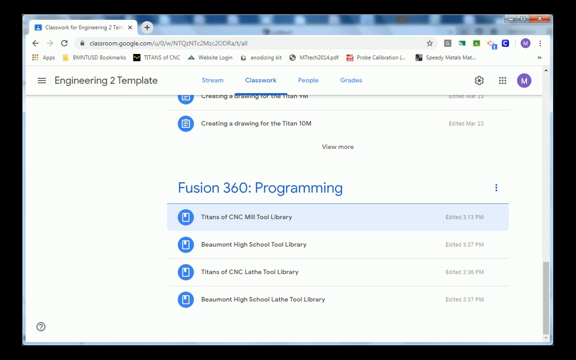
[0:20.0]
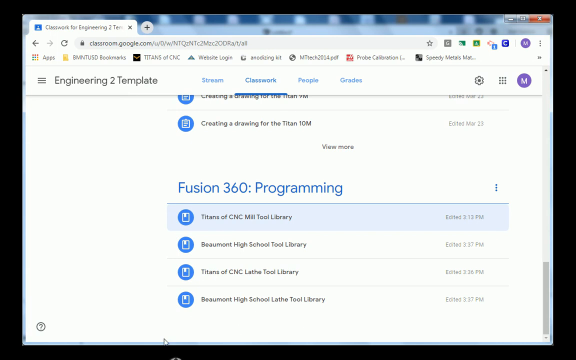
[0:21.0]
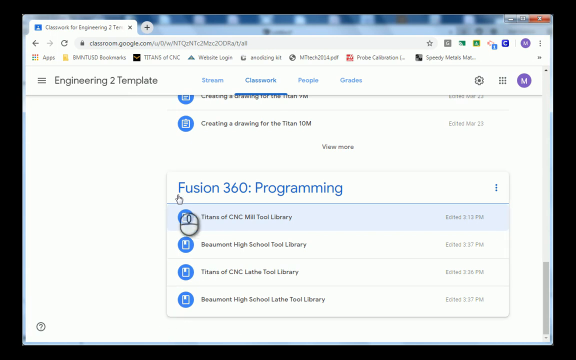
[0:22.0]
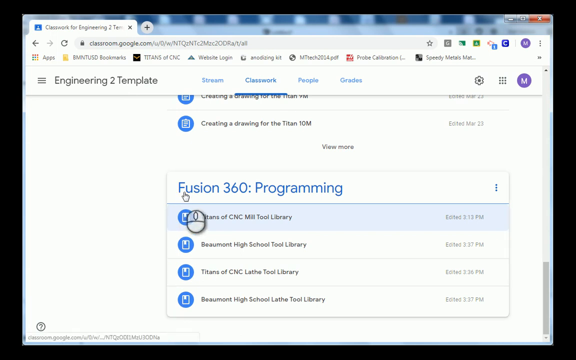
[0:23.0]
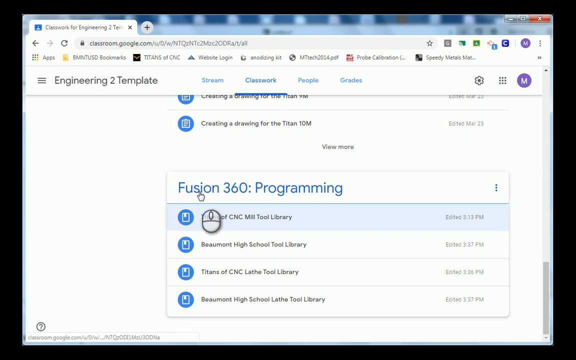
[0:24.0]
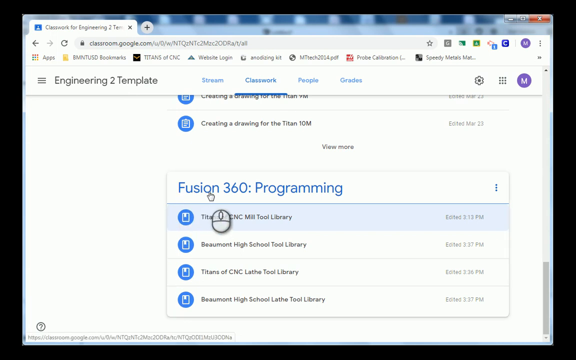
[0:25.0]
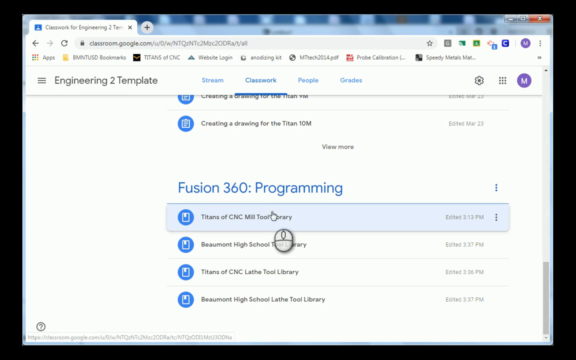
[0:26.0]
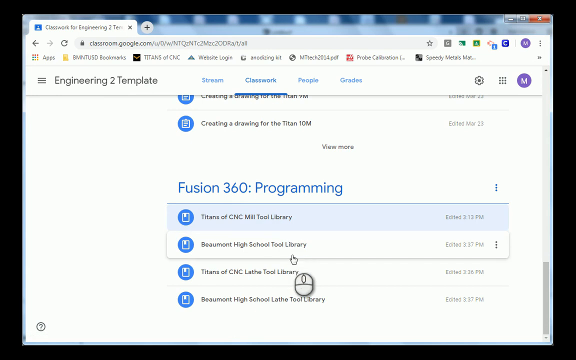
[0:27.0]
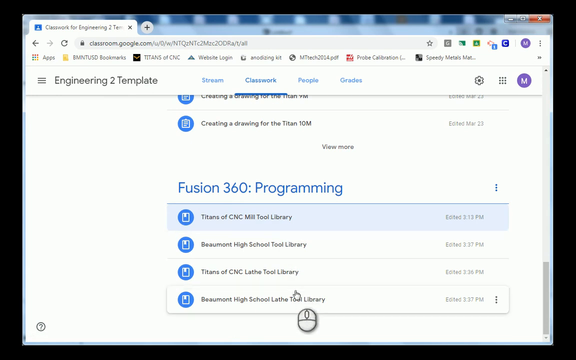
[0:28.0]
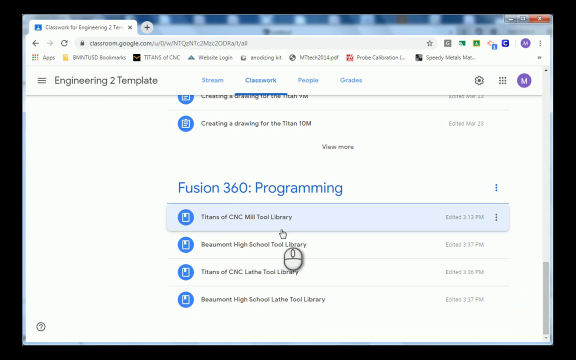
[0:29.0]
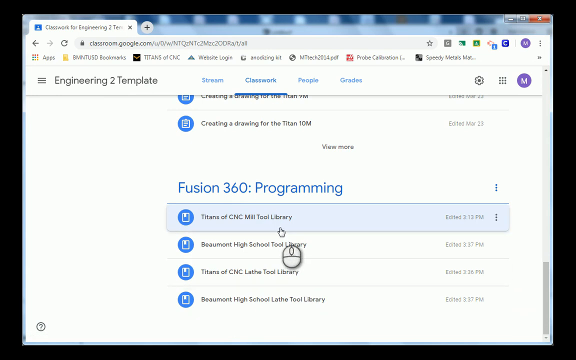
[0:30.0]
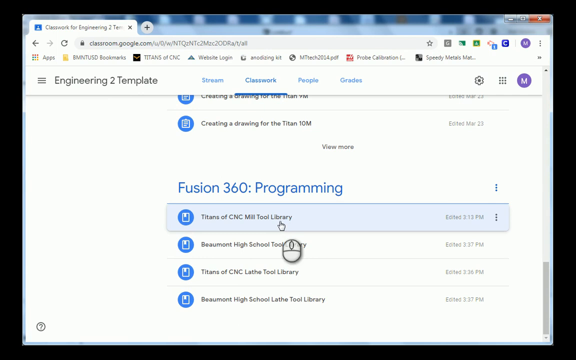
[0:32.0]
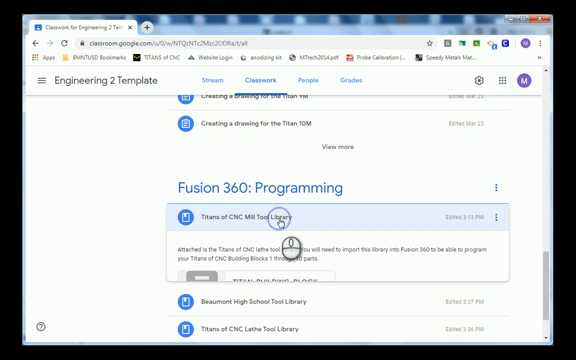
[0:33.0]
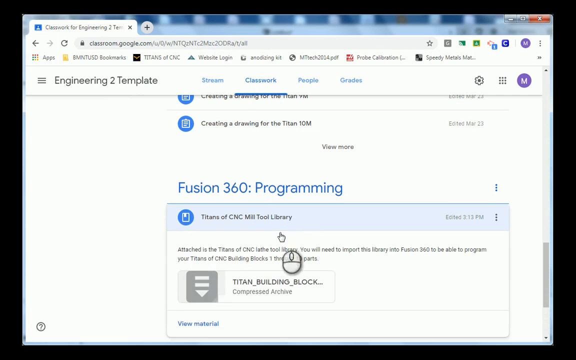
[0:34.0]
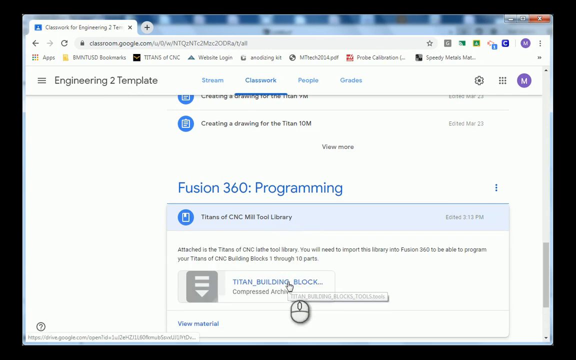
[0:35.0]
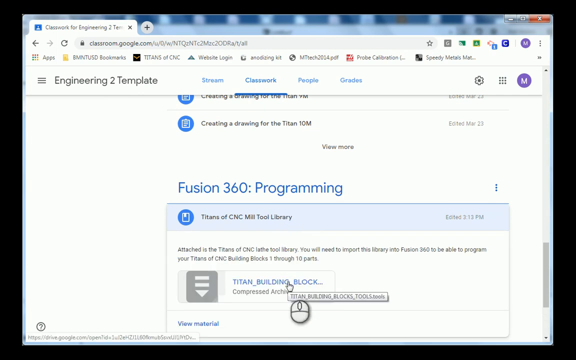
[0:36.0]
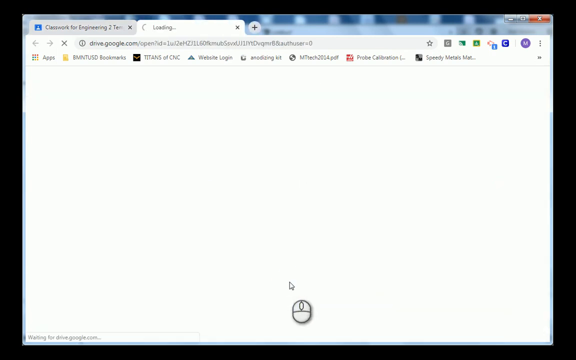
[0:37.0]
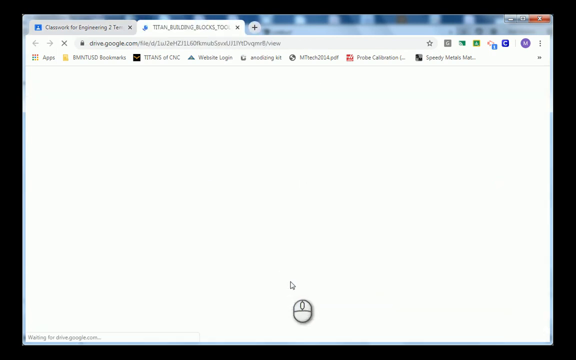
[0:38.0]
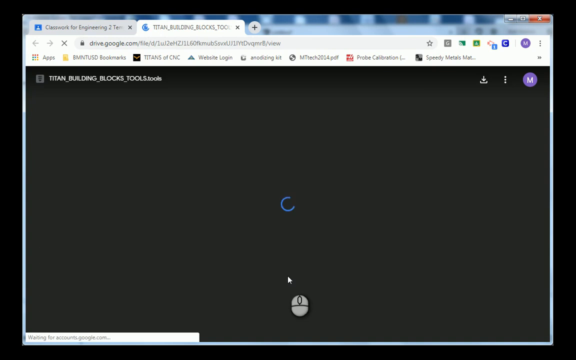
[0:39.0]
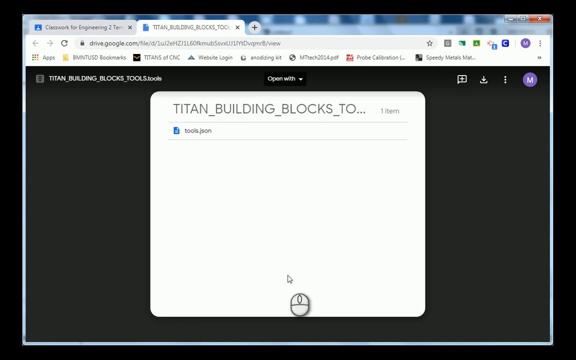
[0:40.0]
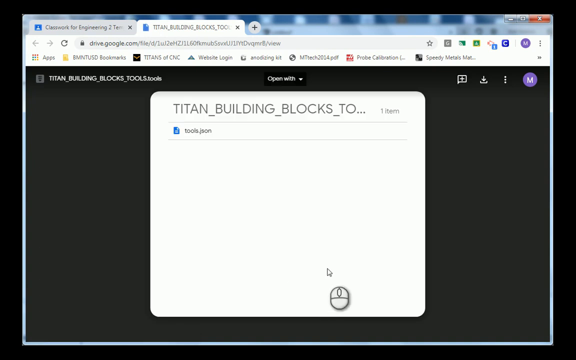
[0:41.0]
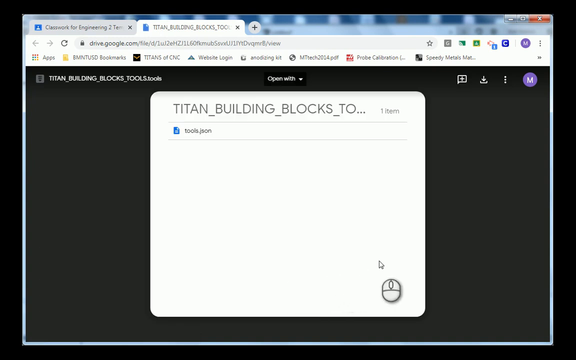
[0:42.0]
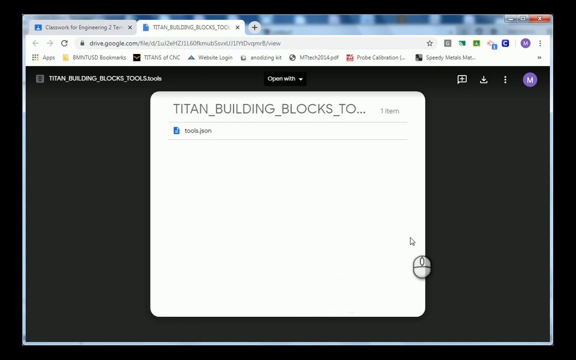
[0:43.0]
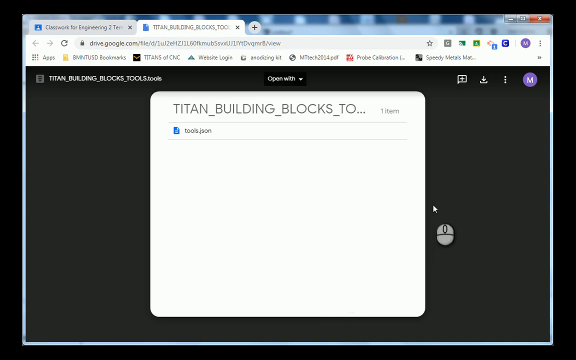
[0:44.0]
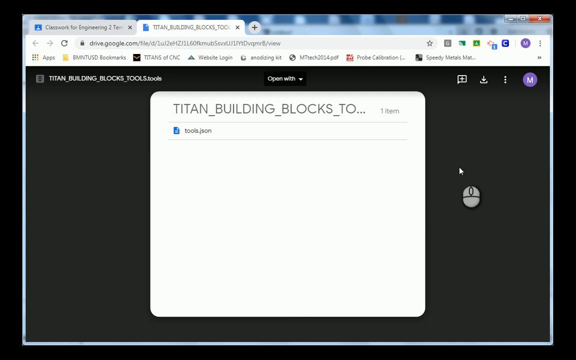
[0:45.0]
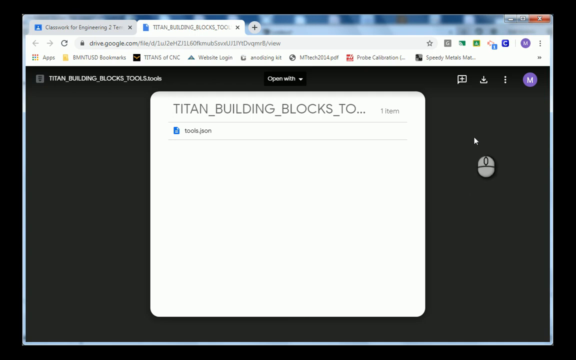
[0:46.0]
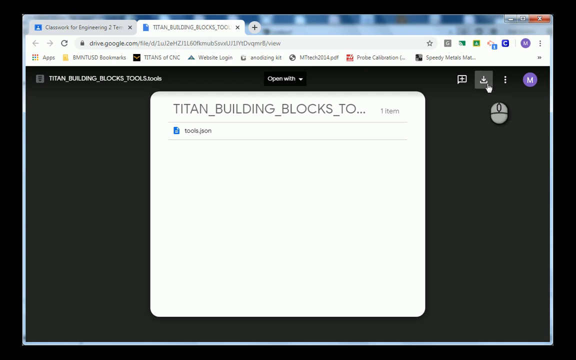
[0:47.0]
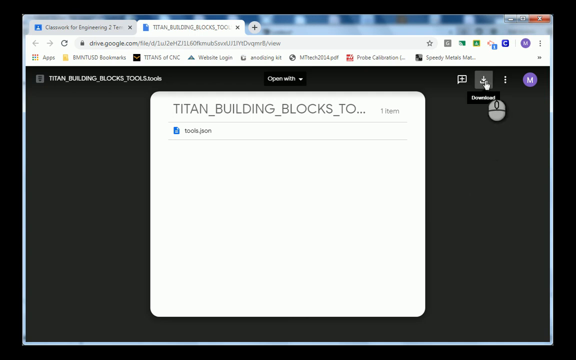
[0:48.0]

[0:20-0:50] A web browser shows a Google Classroom page where various files can be downloaded. The section in focus is labeled "Fusion 360 Programming", with files named "Titans of CNC Mill Tool Library", "Beaumont High School Tool Library", "Titans of CNC Lathe Tool Library" and "Beaumont High School Lathe Tool Library". The person clicks on "Fusion 360 Programming" at the very top, then moves the mouse down over the "Titans of CNC Mill Tool Library" file at the top and clicks it. It expands to reveal a text box that reads "Attached is the Titans of CNC Lathe Tool Library. You need to import this library into Fusion 360 to be able to program your Titans of CNC building blocks 1 through 10 parts." A downloadable compressed archive file is shown. The person mouses over the compressed file, which opens a new tab with a gray screen and a white box in the center showing a file inside the archive. The mouse then moves to the download option in the top right corner of the page and clicks it.